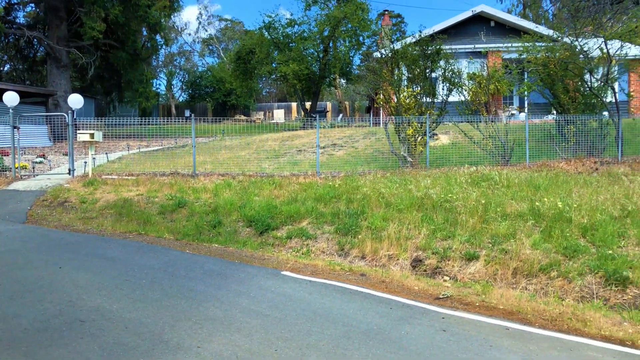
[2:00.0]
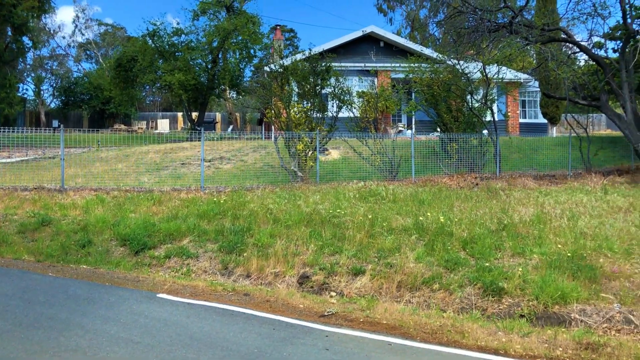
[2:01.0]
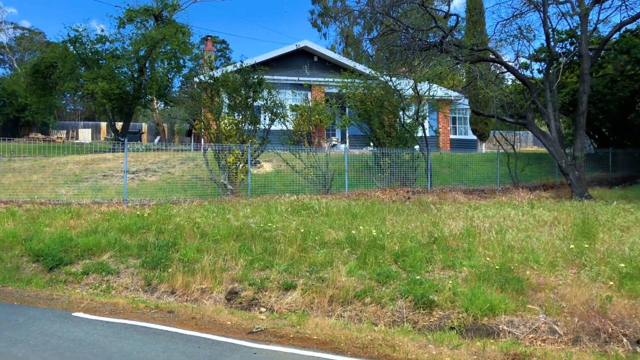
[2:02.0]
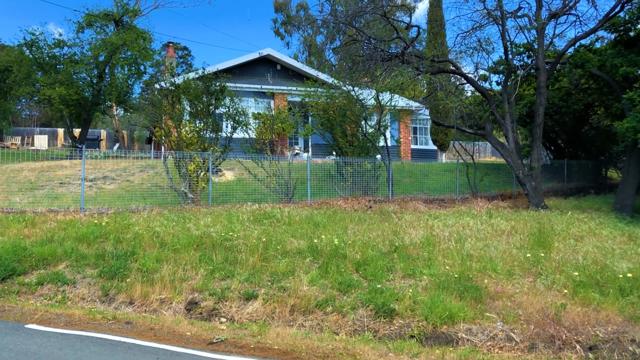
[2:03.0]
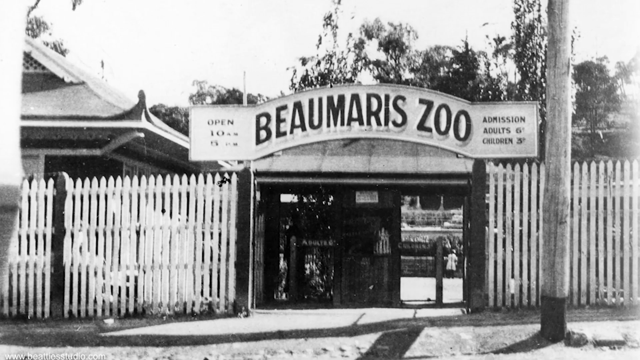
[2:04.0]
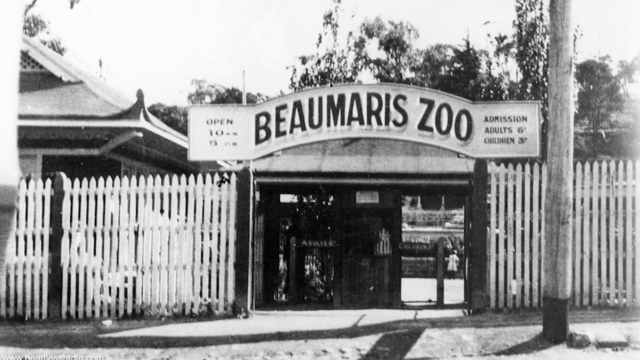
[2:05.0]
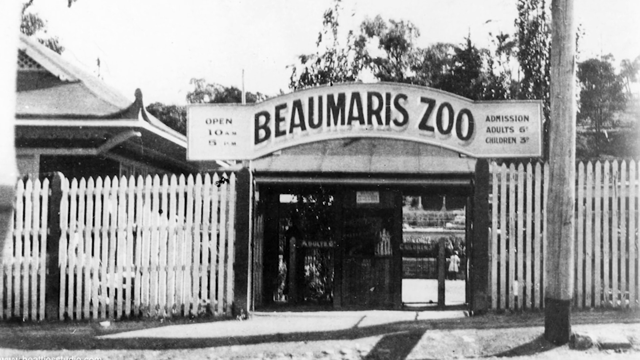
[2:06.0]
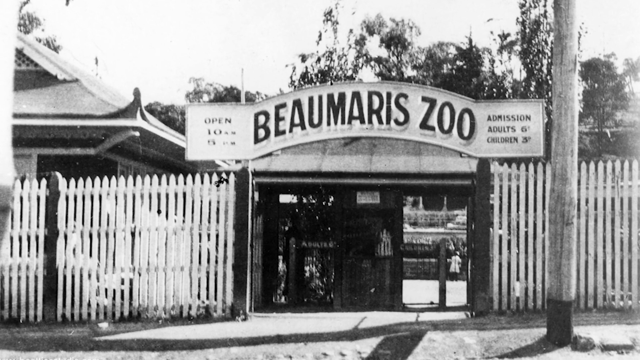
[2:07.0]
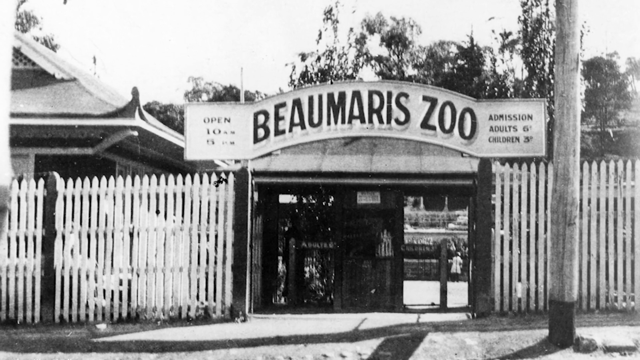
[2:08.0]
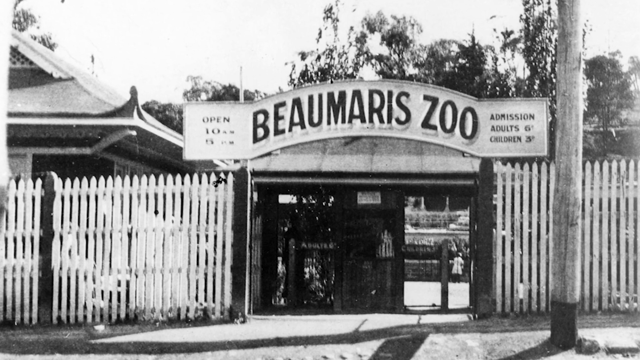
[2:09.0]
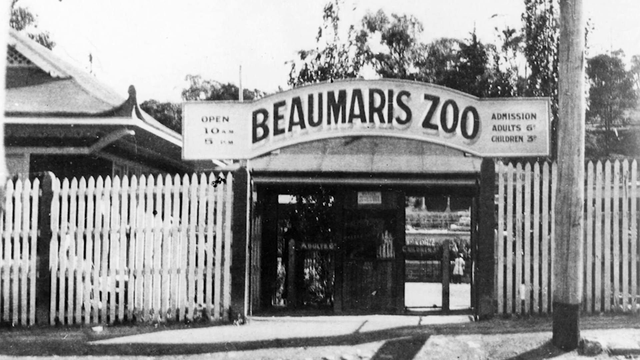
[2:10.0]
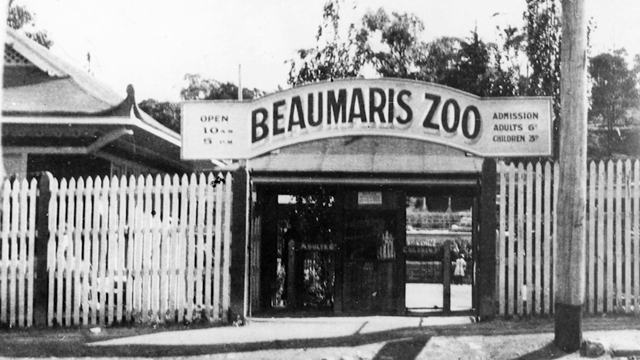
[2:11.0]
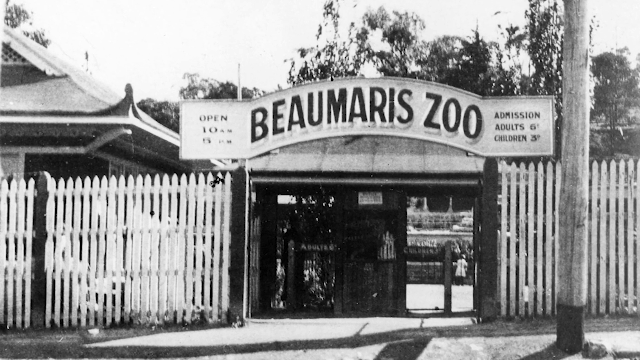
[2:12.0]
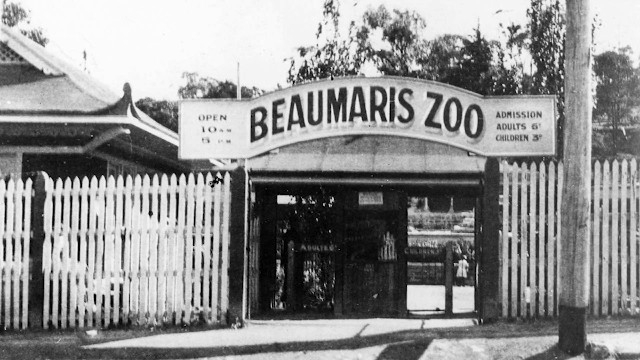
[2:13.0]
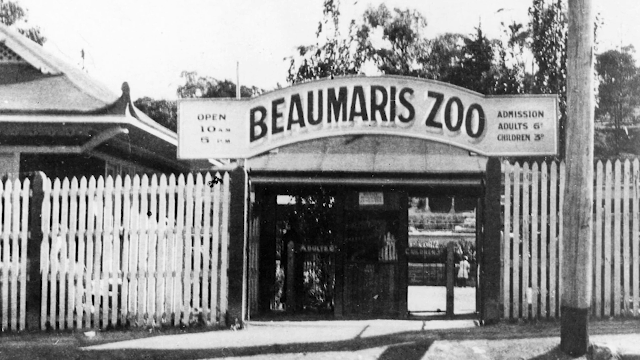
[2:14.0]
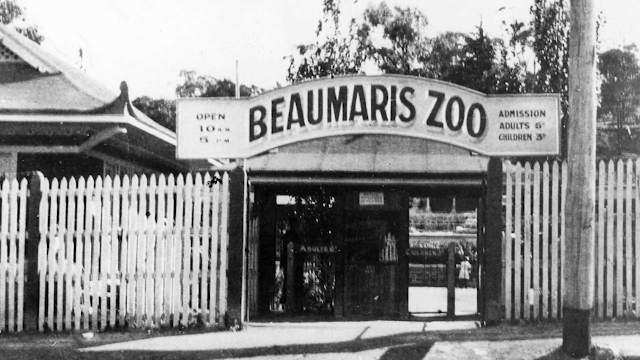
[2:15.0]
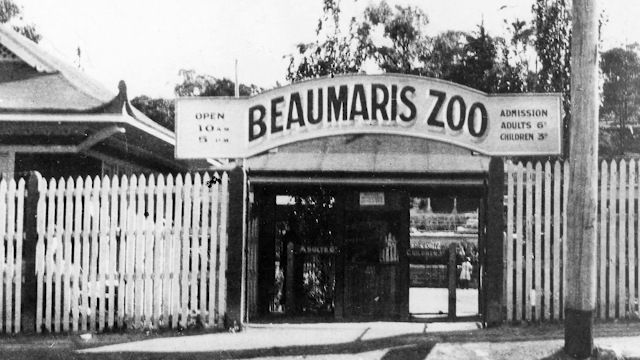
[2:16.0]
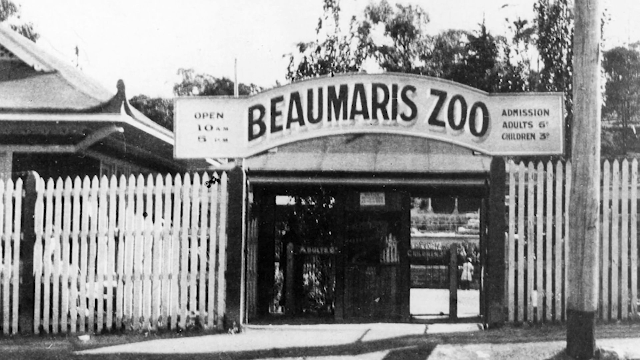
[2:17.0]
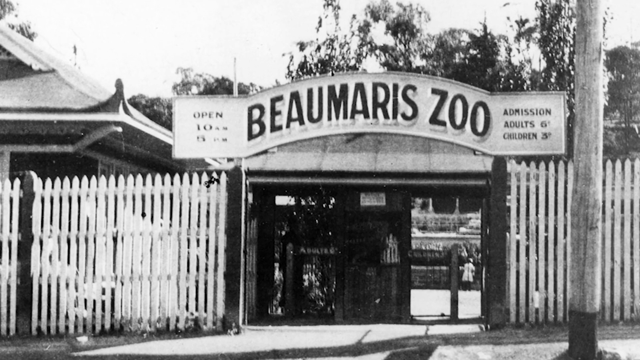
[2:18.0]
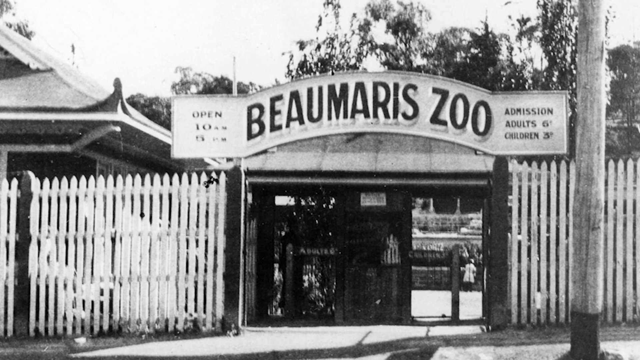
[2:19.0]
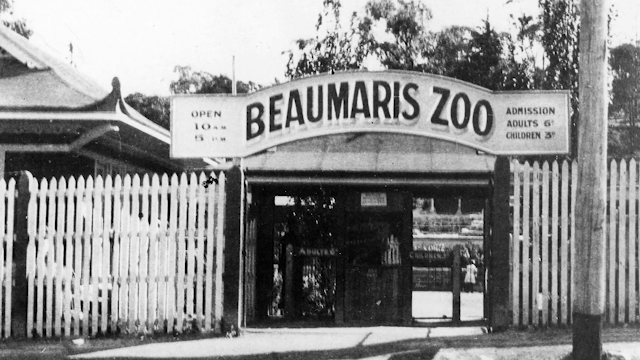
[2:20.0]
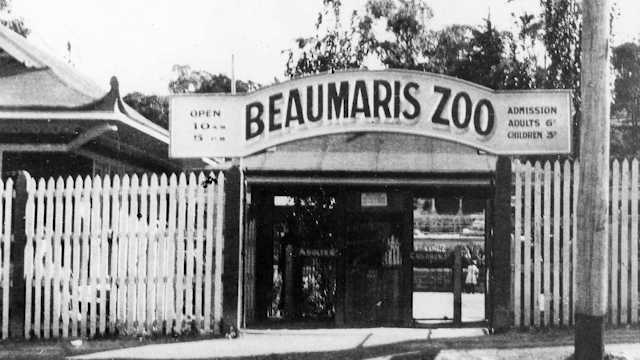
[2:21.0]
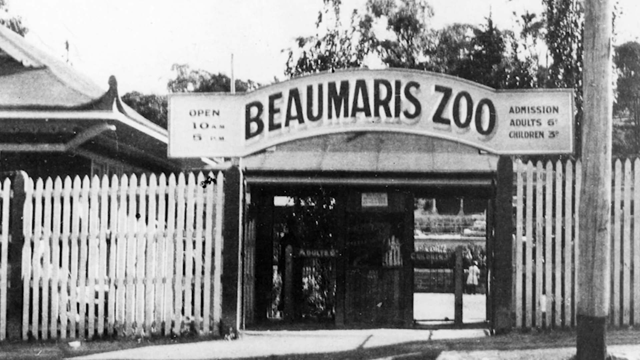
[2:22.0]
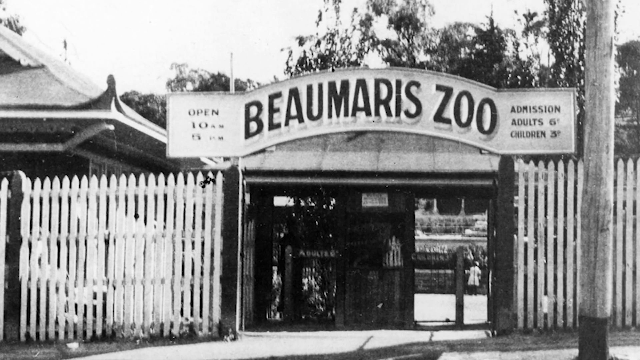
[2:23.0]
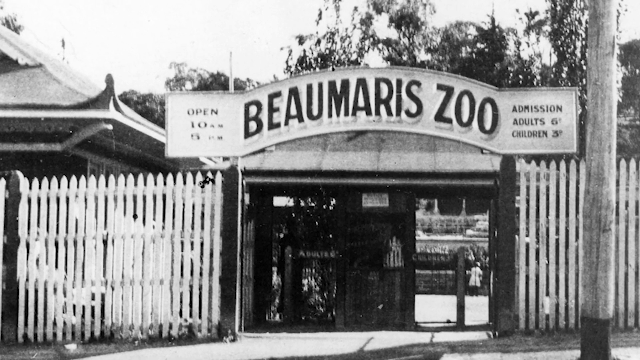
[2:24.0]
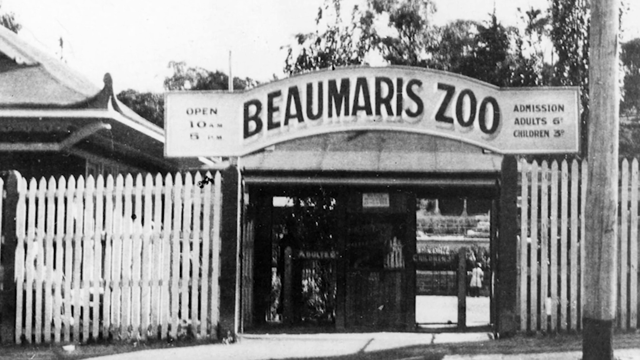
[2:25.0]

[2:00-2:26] The camera moves to the right over grass, then a fence, with a blue and white house beyond the fence. The camera keeps moving to the right, and then the entrance of the zoo is seen again in a very old black and white photo; the zoo is called Beaumaris Zoo. A white picket fence is on the left and right sides of the entrance, and treetops peek above the sign in the distance. The entrance is open: on the right side the door is open, and someone is vaguely visible in the distance through the door. The camera slowly zooms into the entrance. On the right side there is a pole, like a wooden pole, and to the left there appears to be some sort of building, with its rooftop visible.